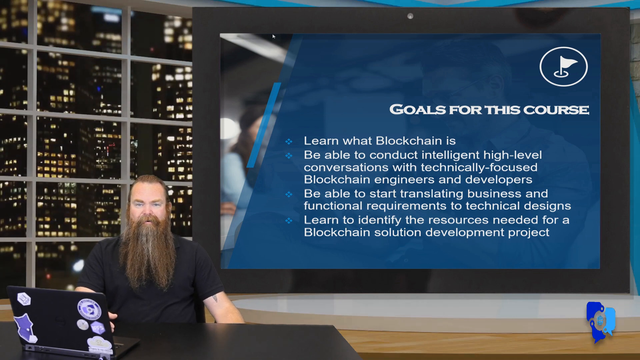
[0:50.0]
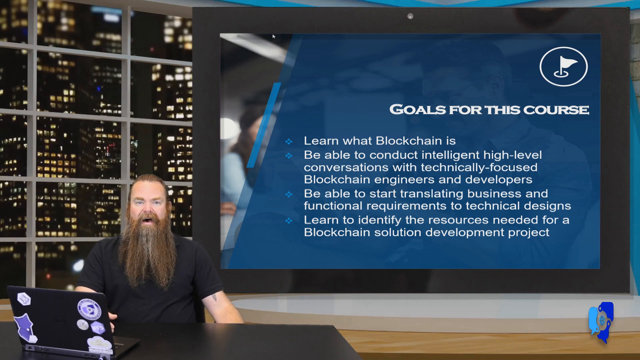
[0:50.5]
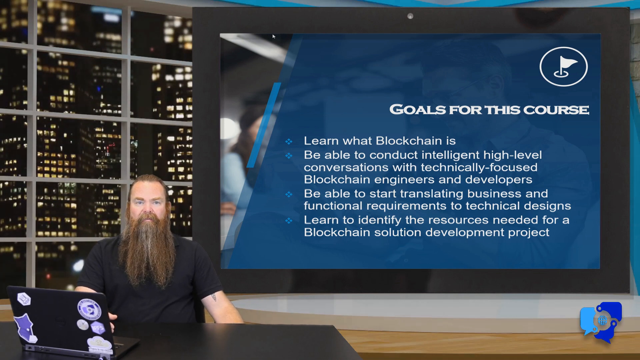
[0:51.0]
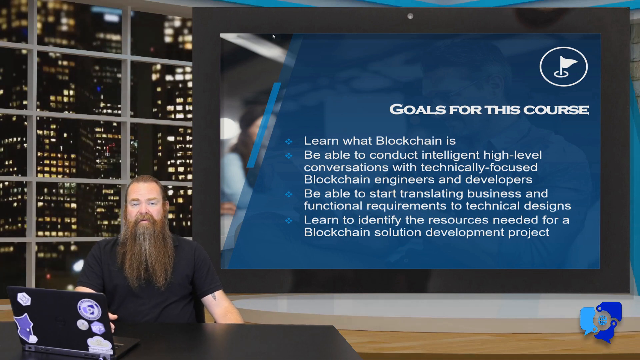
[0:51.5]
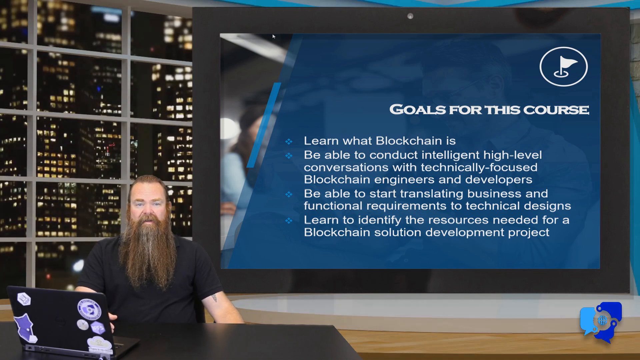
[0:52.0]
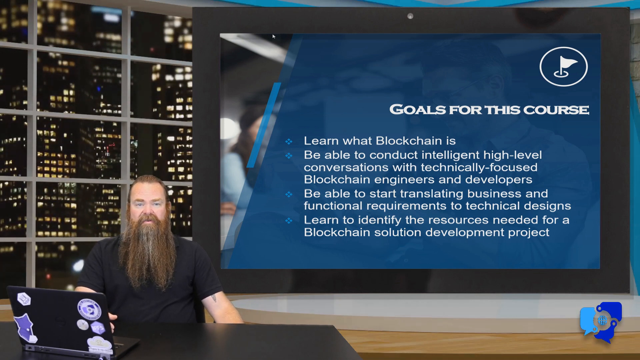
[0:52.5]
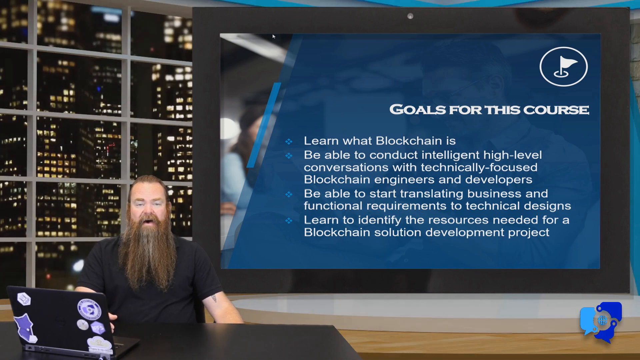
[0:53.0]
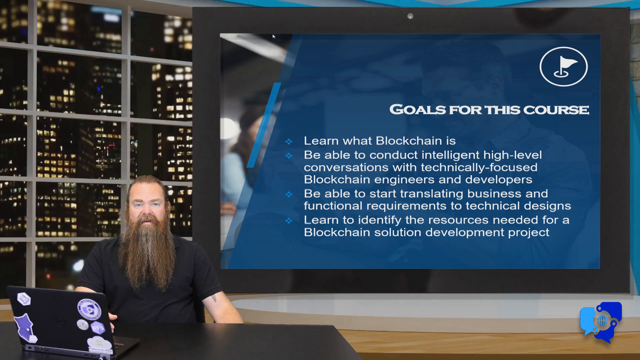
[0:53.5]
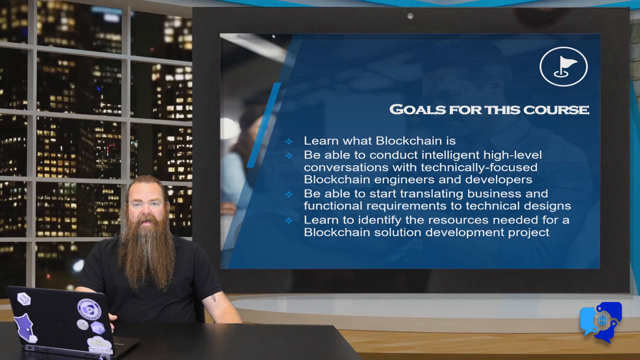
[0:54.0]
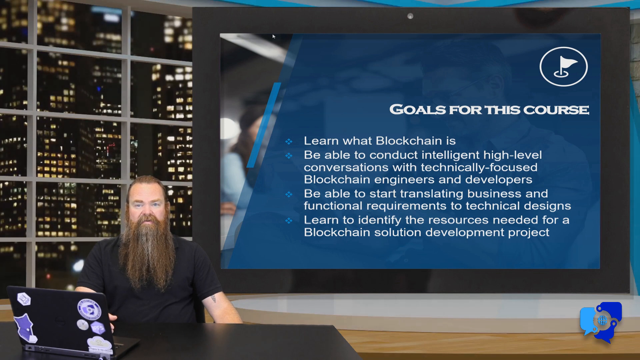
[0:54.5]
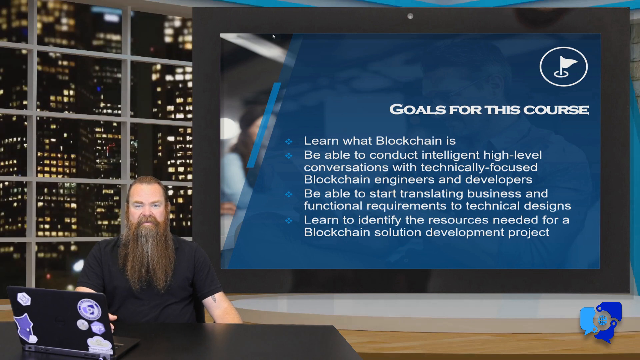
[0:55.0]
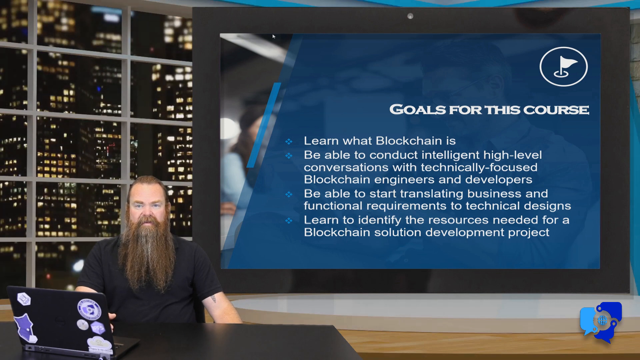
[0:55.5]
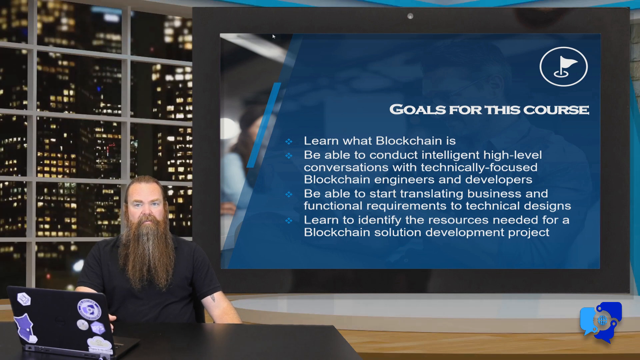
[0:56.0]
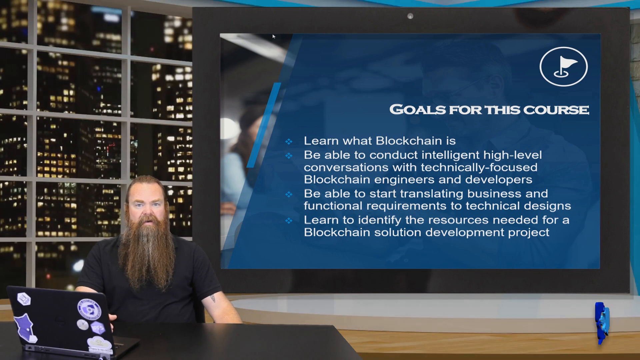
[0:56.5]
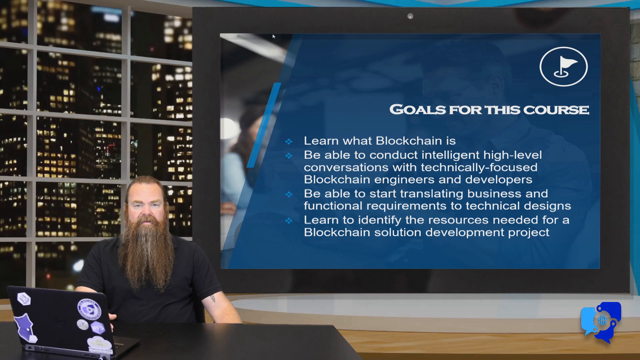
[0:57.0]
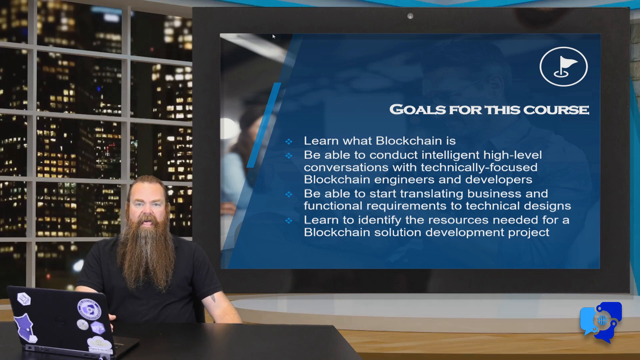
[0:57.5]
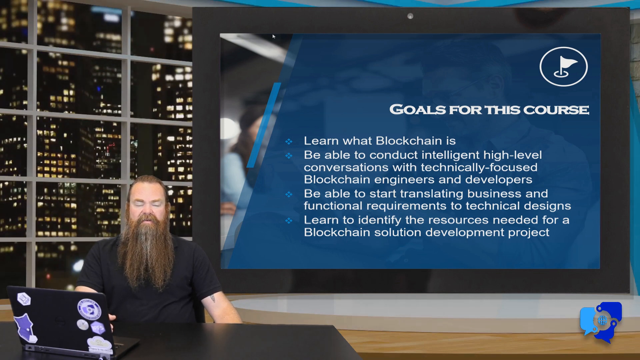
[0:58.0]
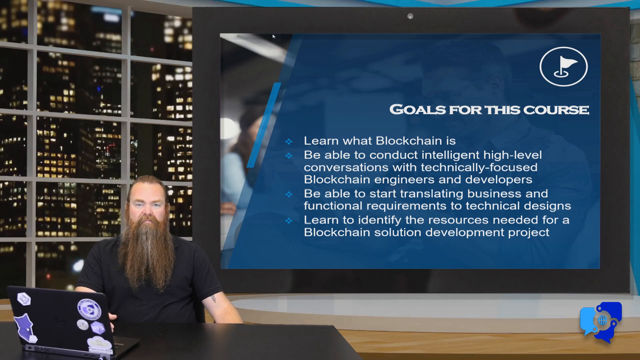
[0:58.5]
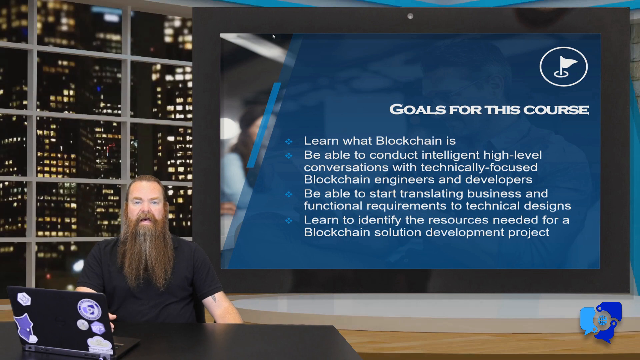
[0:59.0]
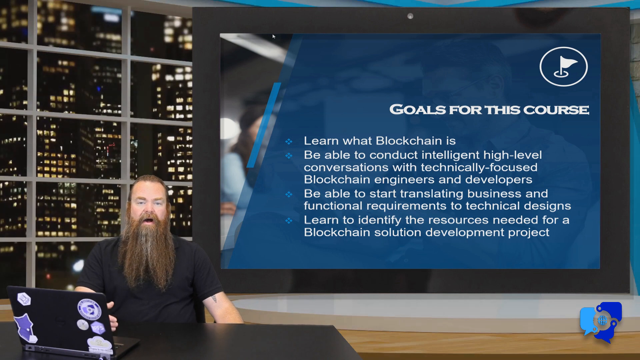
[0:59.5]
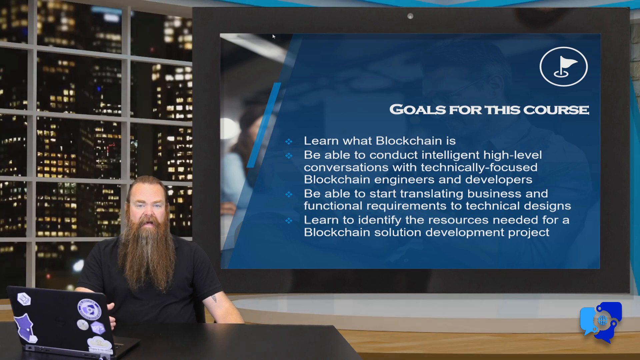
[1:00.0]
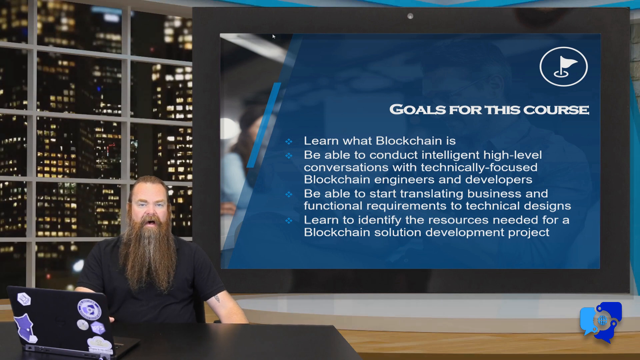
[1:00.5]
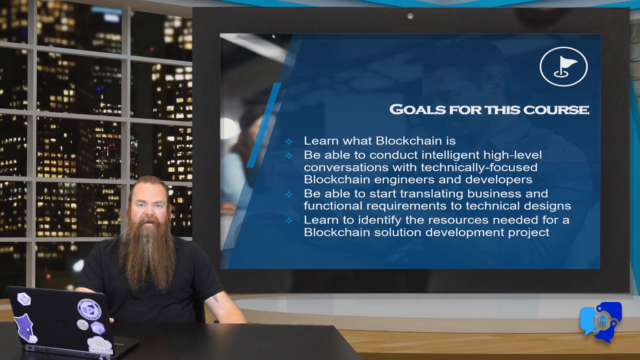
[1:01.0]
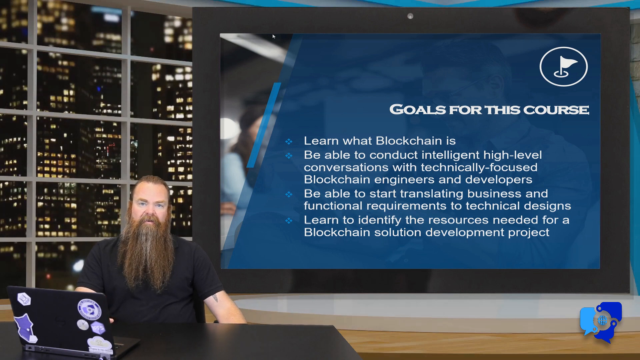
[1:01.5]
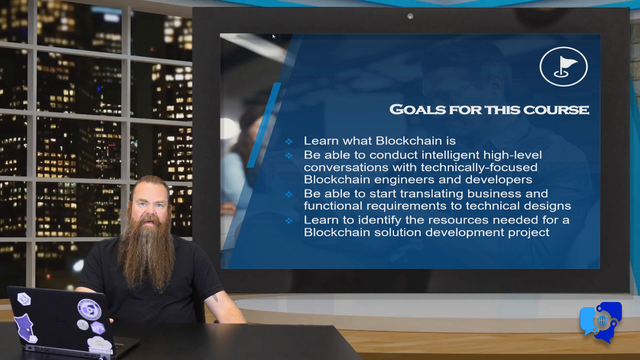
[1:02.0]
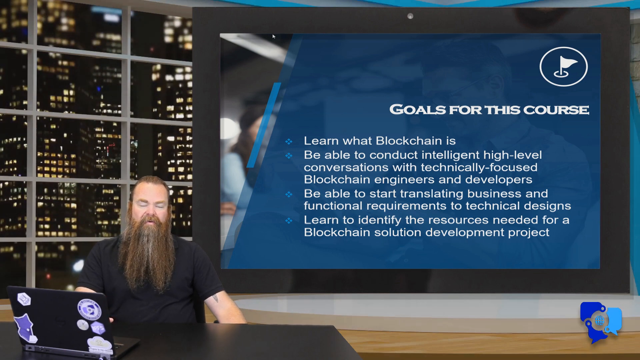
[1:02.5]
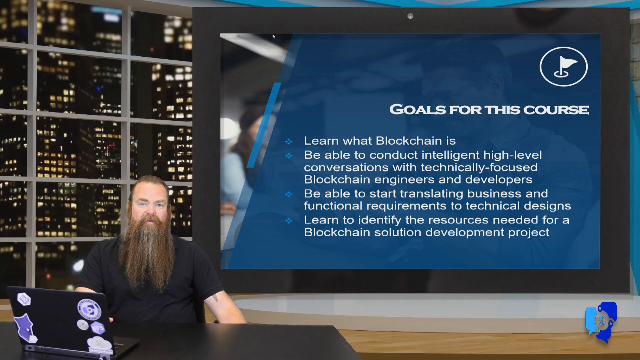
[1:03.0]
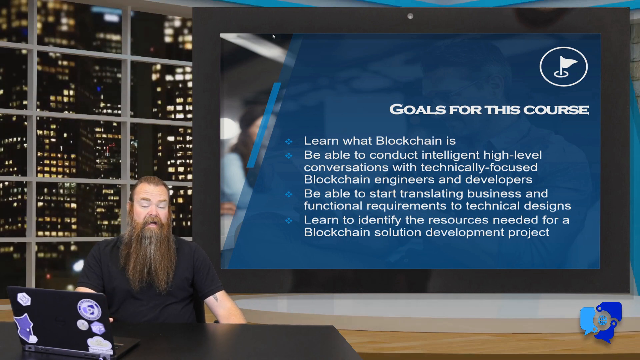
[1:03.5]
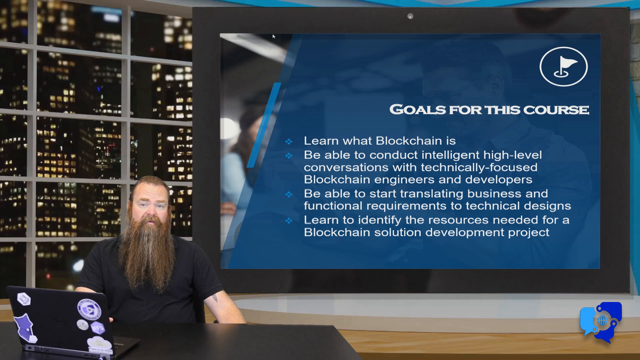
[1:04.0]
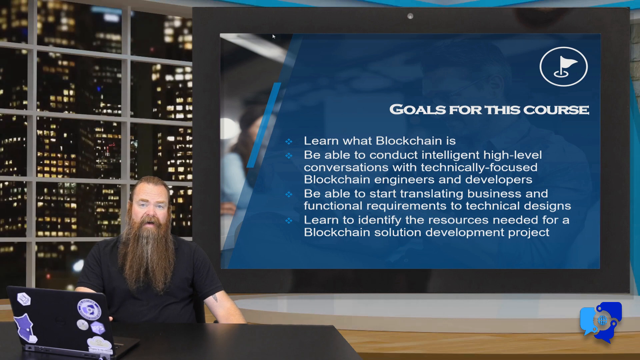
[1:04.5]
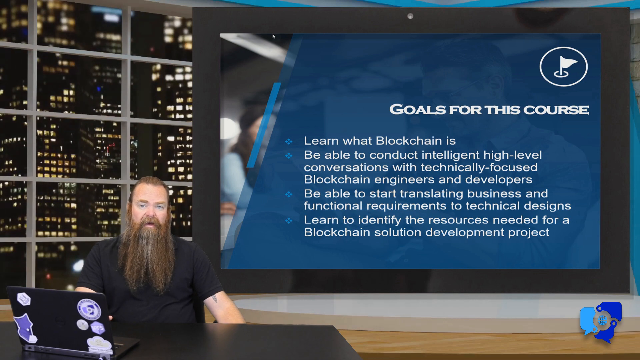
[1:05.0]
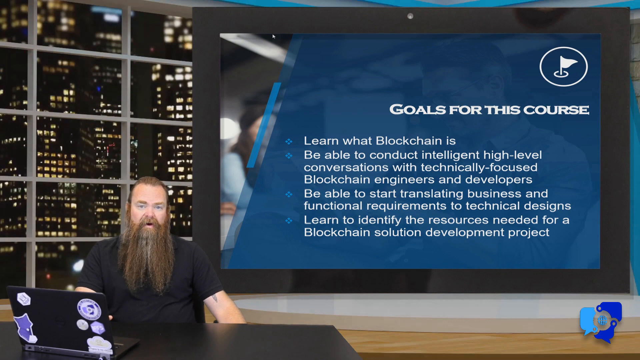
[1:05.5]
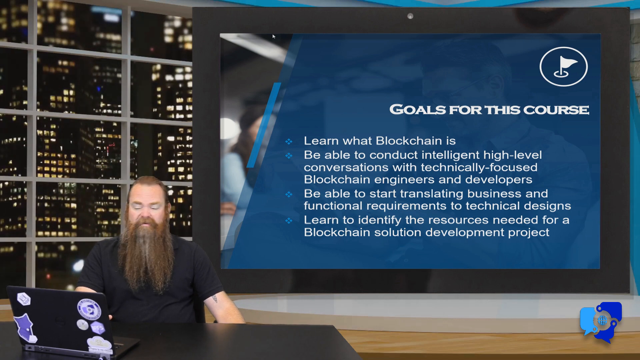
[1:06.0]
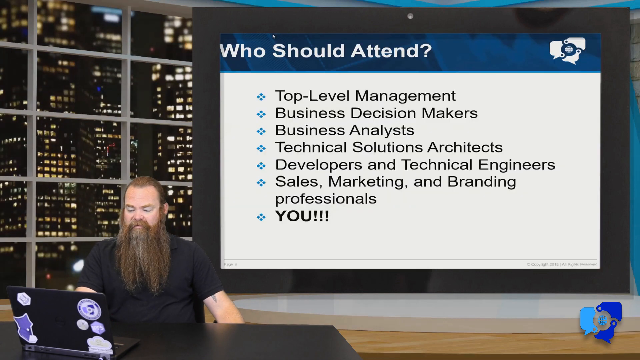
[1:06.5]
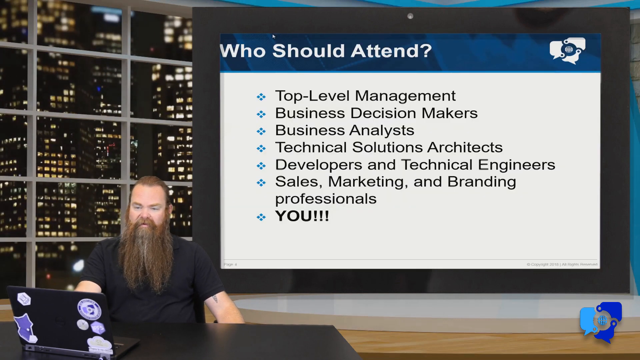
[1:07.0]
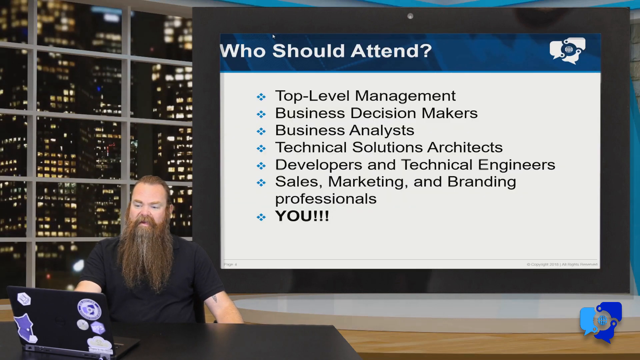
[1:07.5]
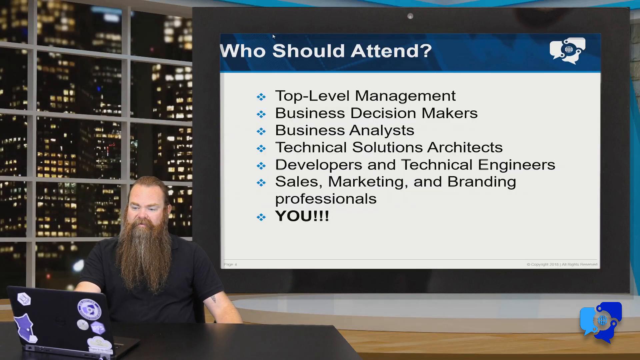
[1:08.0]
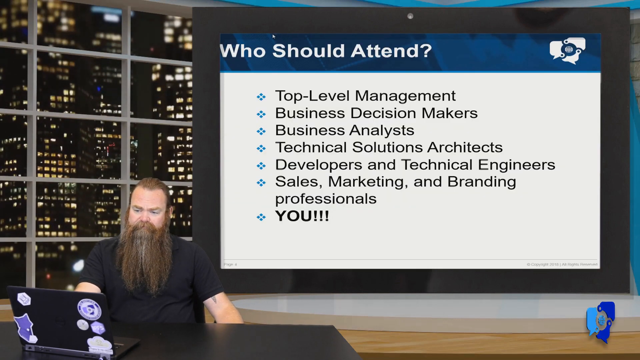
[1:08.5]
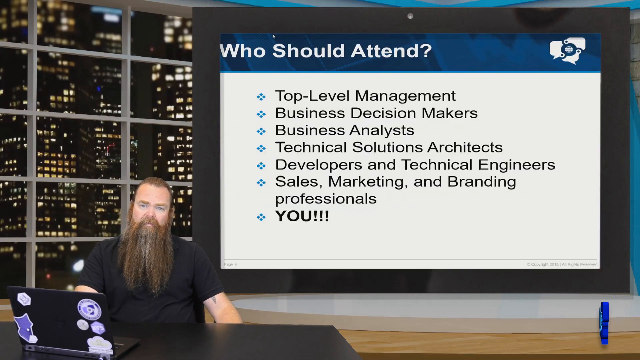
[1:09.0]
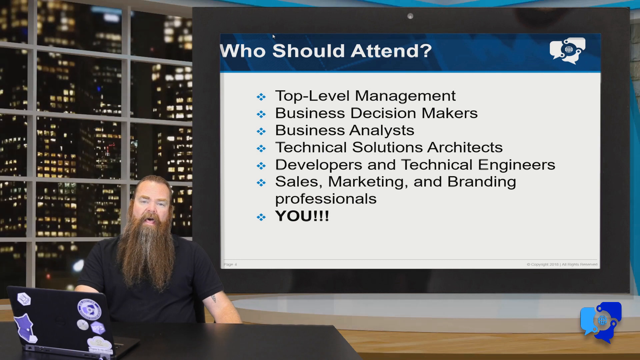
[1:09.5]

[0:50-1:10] The goals for the course are listed at the side of the screen: "learn what blockchain is, be able to conduct intelligent high-level conversations with technical-focused blockchain engineers and developers, and be able to start translating business and functional requirements to technical designs." Another goal about learning to identify the resources needed for blockchain solution development projects is also listed. Each item has a blue bullet point beside it on a blue background, with a small image at the top of a flag planted in what looks like a golf course. On the left-hand side of the screen is the instructor, with his hair pulled back in a tight ponytail and a long beard parted in the middle. He wears a black t-shirt and is sitting in front of a laptop with purple stickers on it. The screen then changes to read "who should attend", listing "top-level management", "business decision makers", "business analysts" and "you".